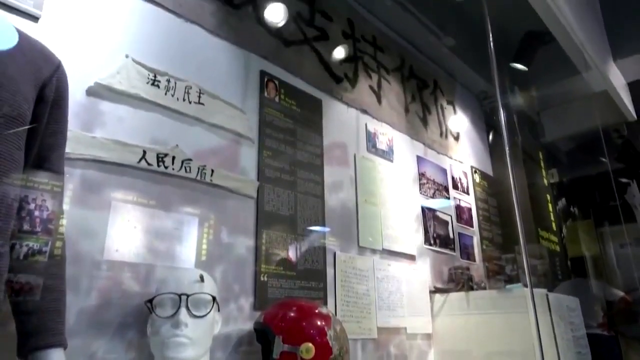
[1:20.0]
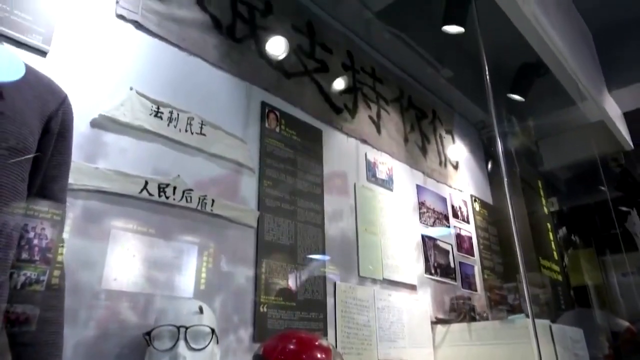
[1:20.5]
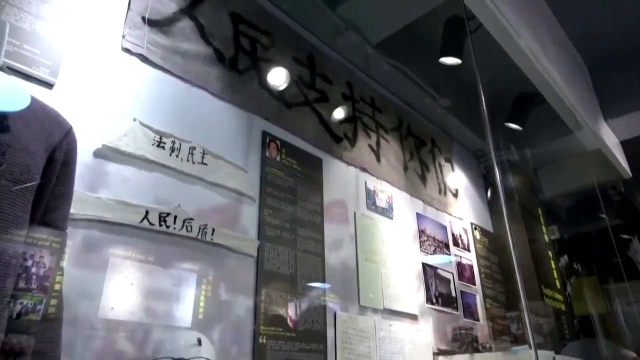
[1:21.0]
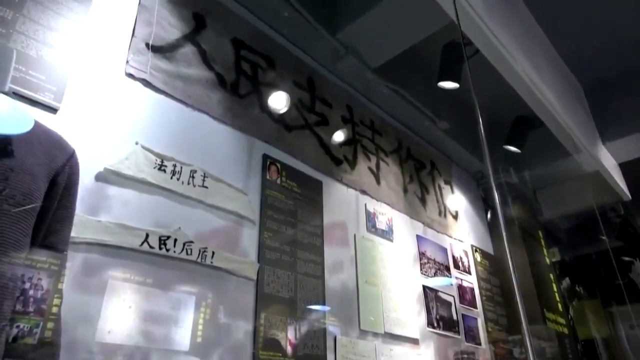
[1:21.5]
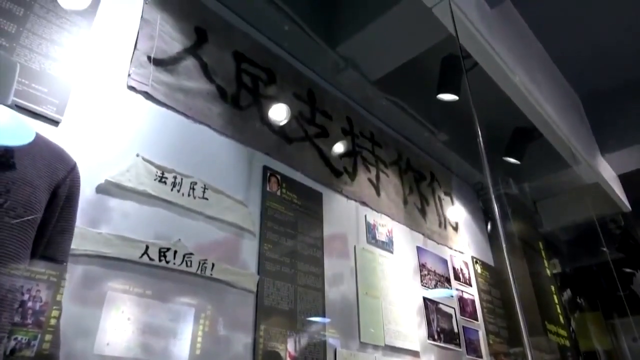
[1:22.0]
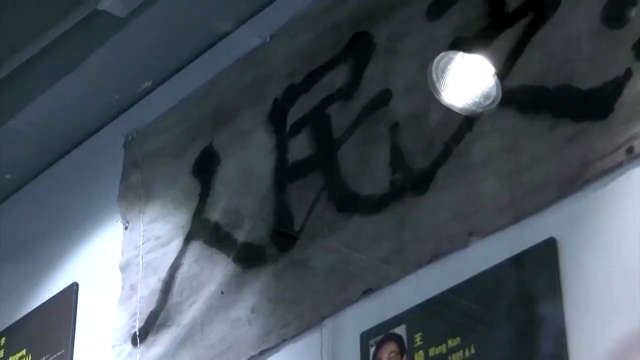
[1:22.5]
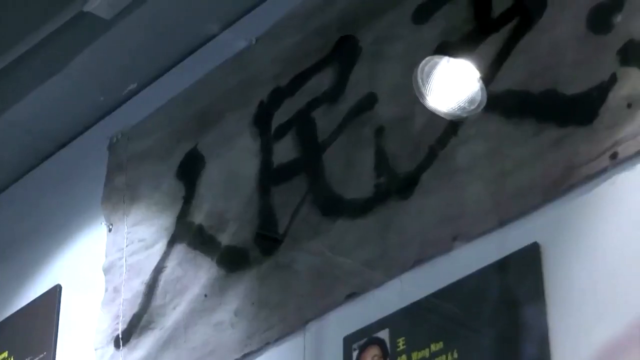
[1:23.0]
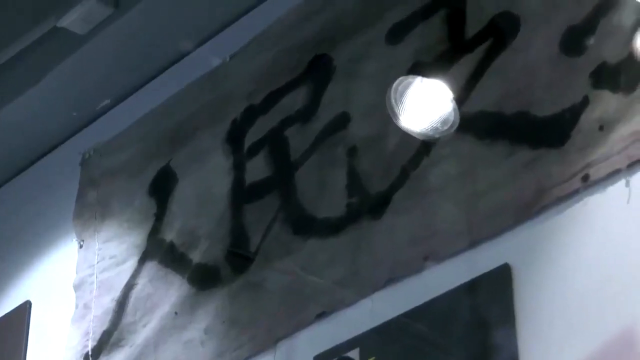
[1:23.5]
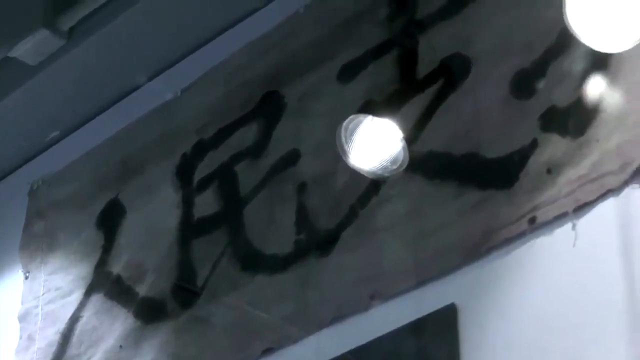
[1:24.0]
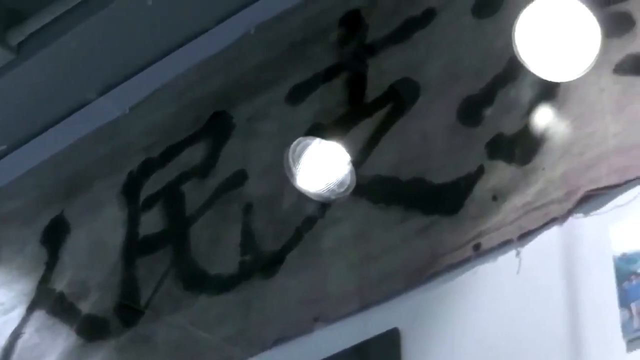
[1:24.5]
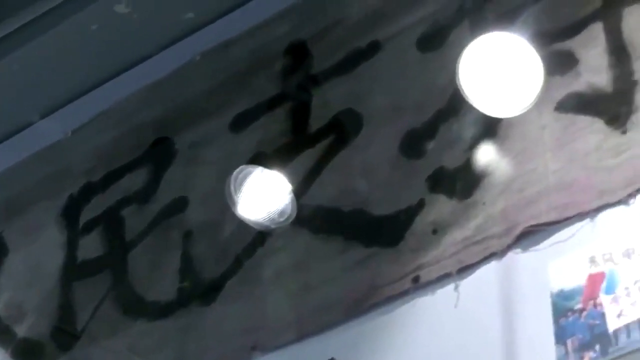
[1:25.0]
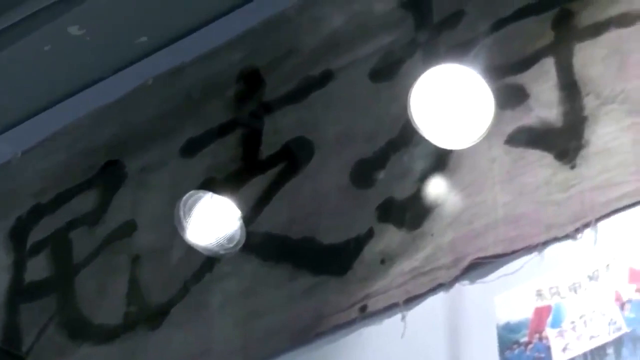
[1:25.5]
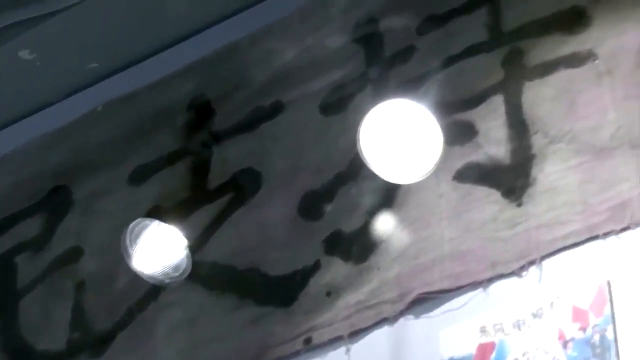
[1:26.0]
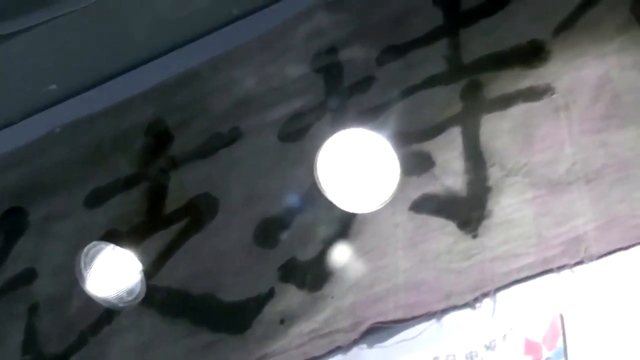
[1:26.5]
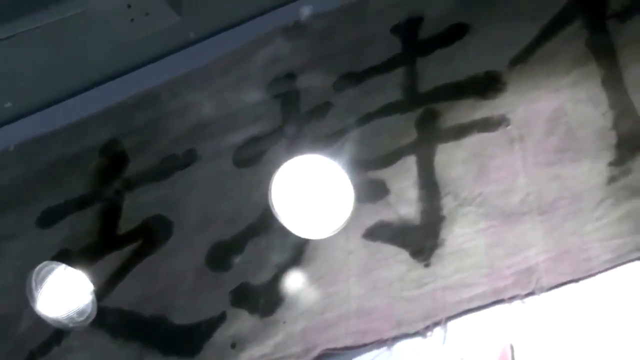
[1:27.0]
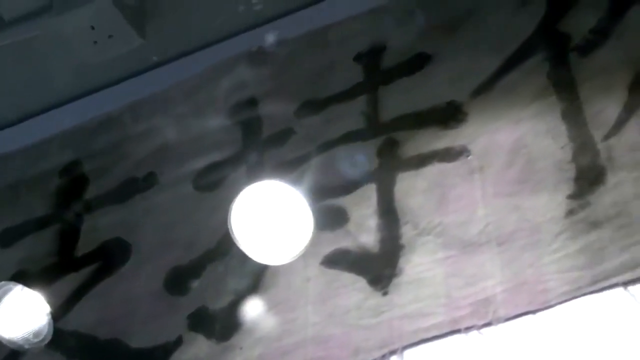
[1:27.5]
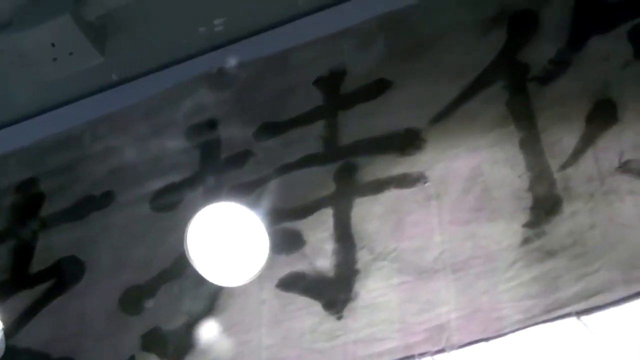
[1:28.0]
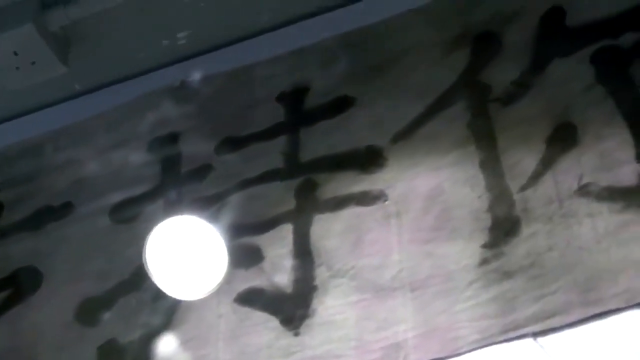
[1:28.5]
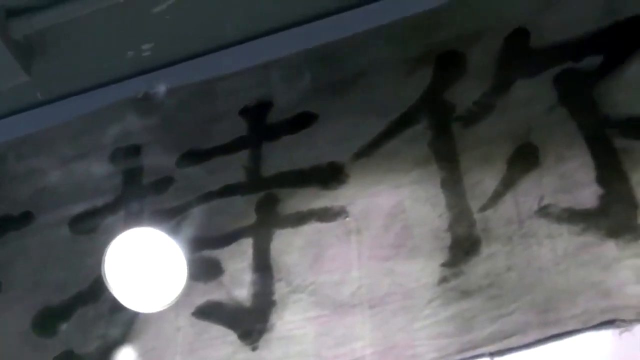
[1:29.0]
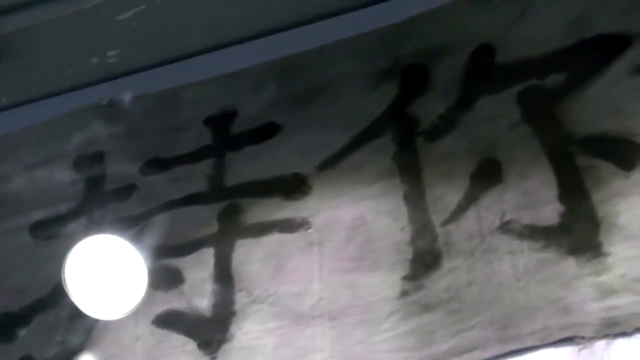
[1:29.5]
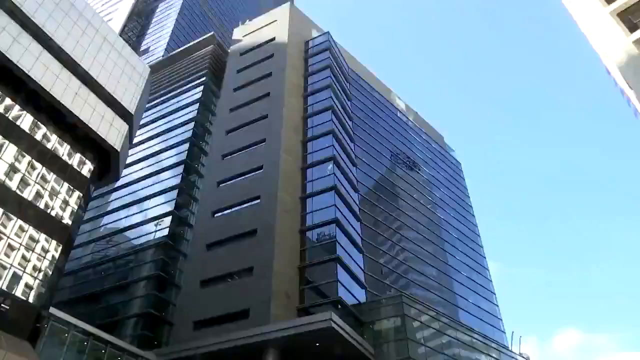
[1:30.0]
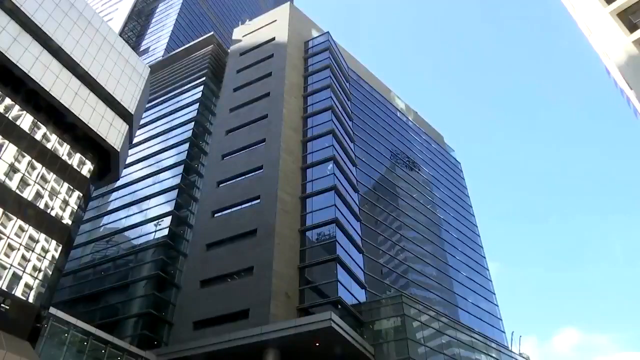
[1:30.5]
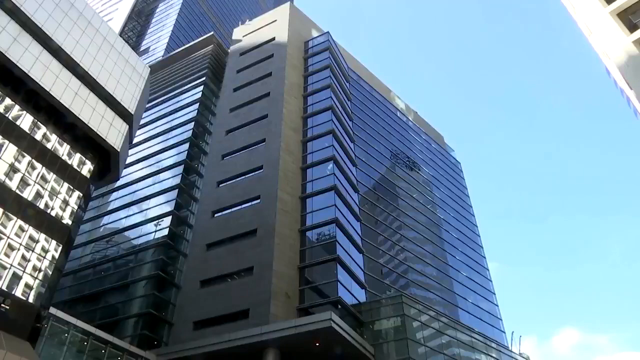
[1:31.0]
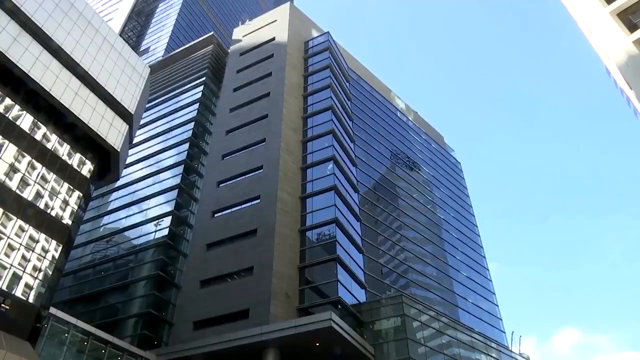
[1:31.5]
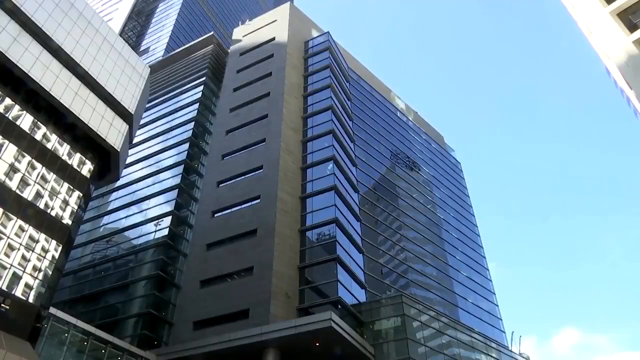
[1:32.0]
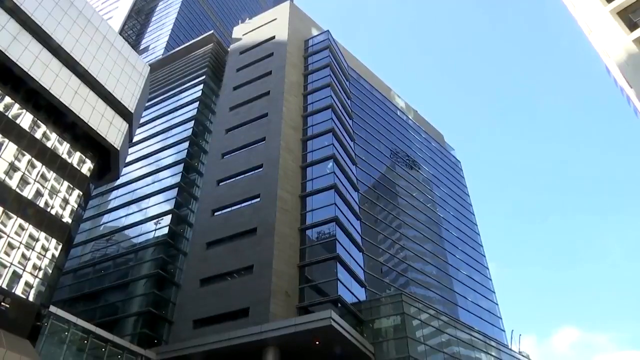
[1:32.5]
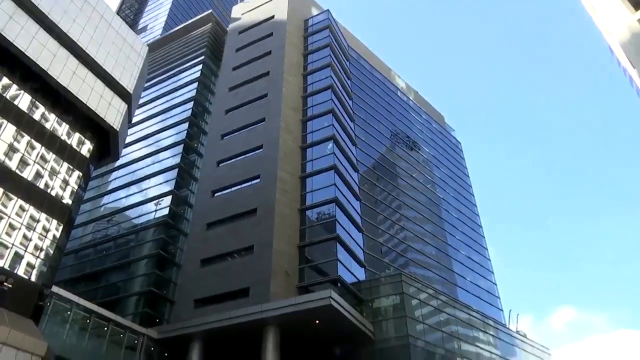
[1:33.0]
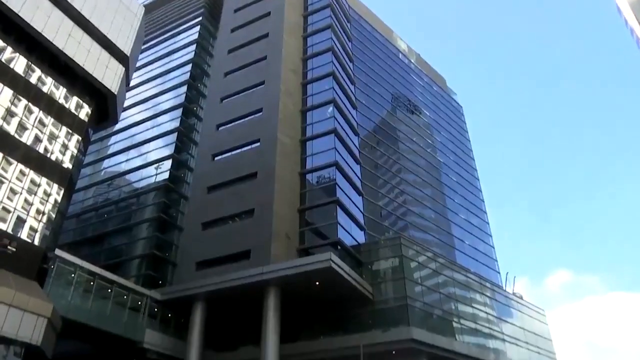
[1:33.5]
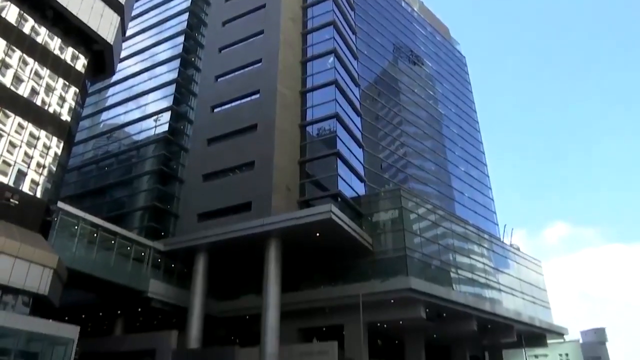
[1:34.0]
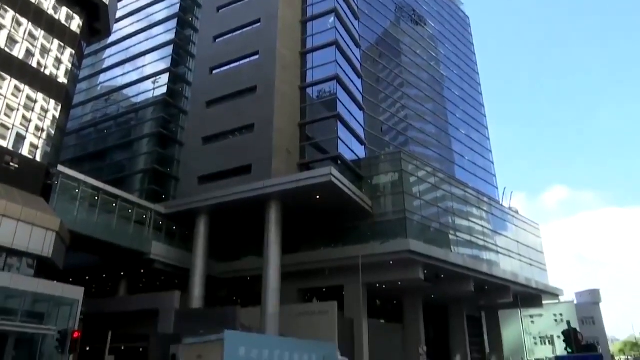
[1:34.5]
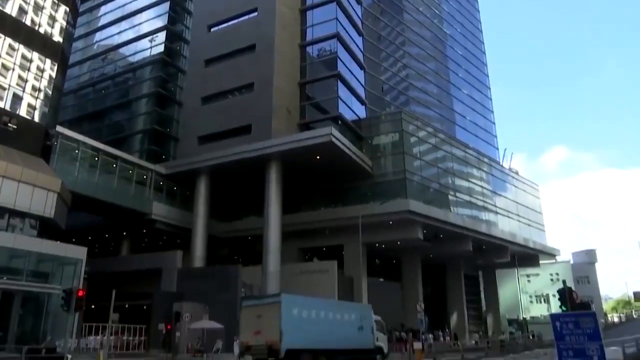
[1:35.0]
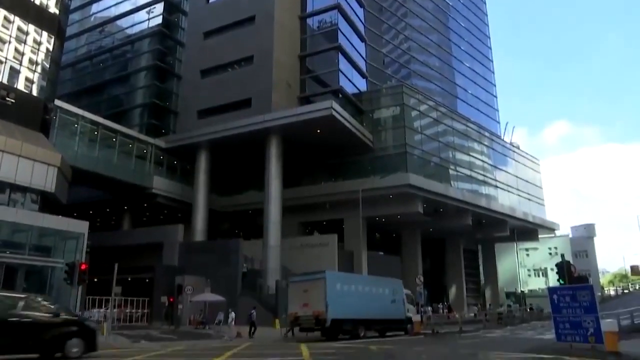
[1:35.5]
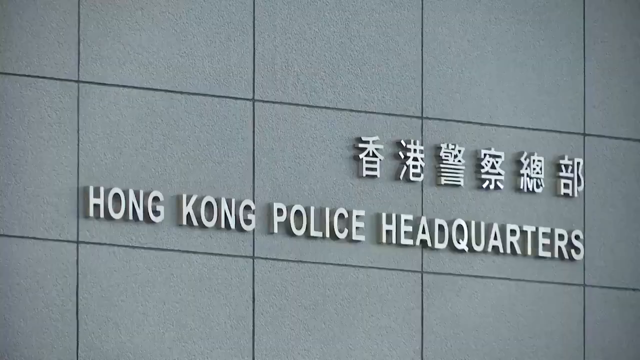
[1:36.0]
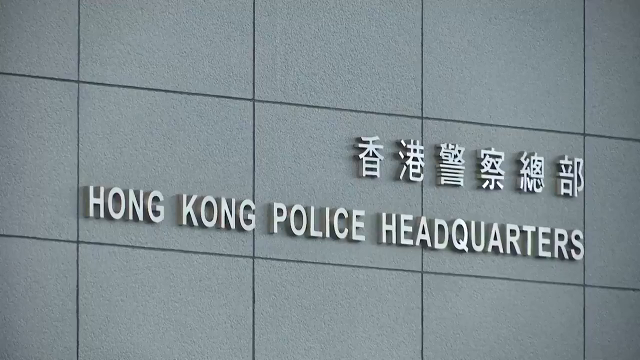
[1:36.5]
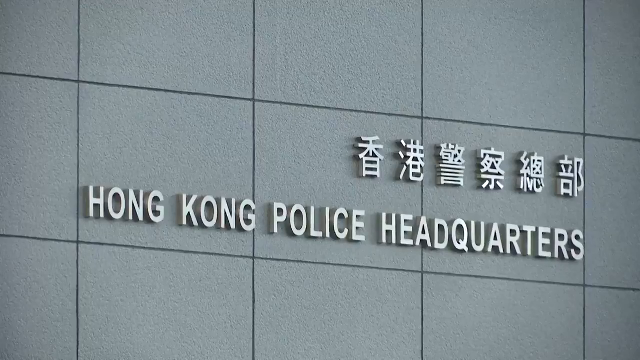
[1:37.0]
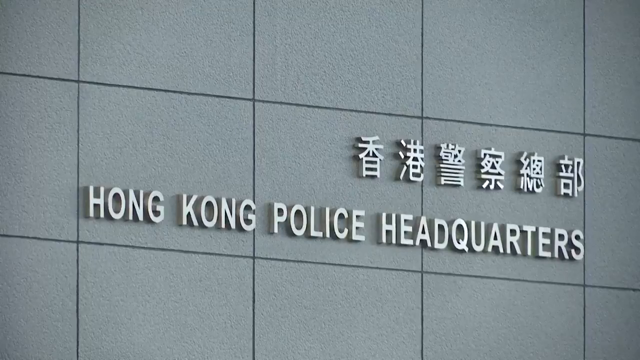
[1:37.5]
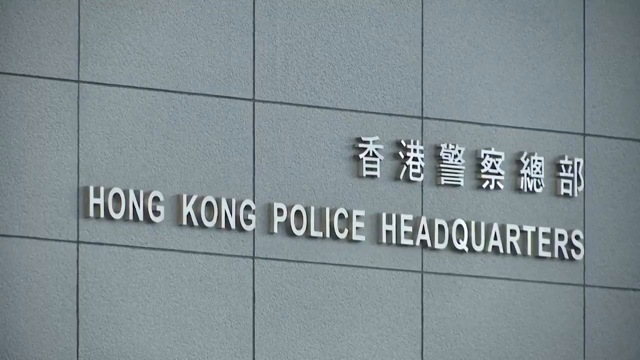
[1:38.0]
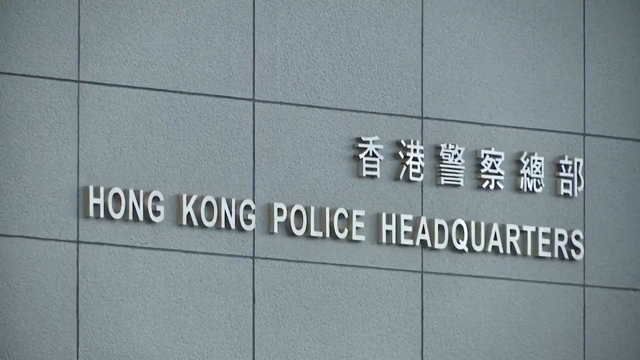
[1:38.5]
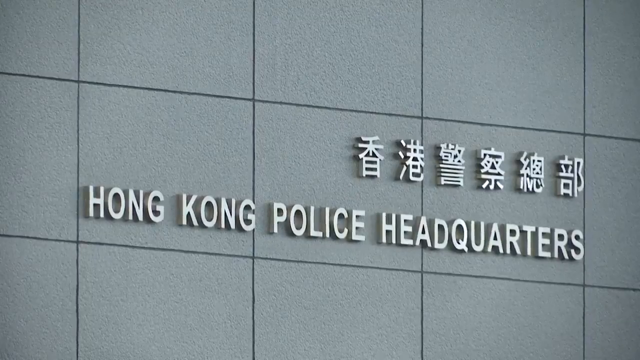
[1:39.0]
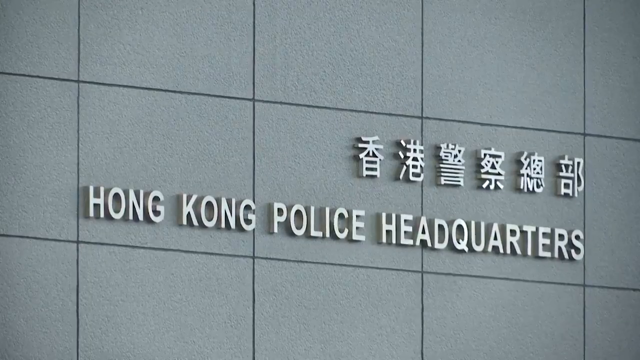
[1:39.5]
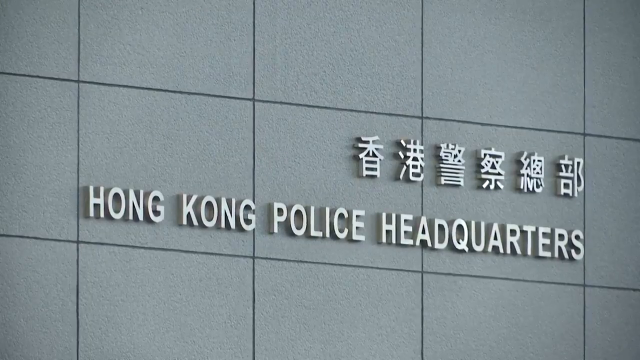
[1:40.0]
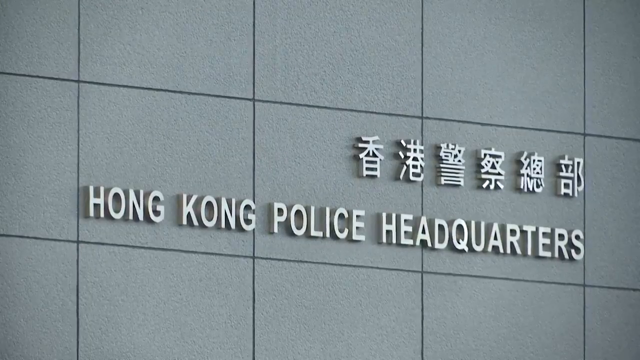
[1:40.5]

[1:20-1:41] The view remains on the glass window and what is behind it, which appears to be some sort of museum or remembrance display, with Chinese writing etched onto the top of the wall. Next, a modern building is shown from the ground looking up; it has around 20 black borders or lines with glass in between, forming 20 layers of glass windows going up. On the left of the picture, text reads "hong kong police headquarters" in English, with Chinese writing above it. The video then sort of freezes and comes to a standstill. Where it says "hong kong police headquarters", there are 15 light gray squares separated by a thin black line or grouting.